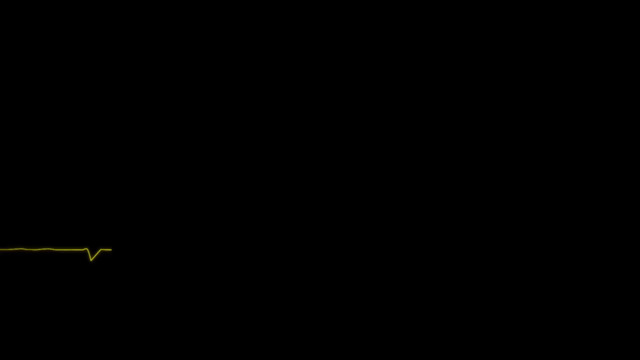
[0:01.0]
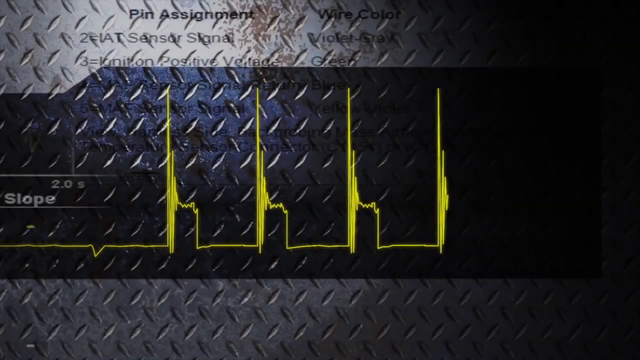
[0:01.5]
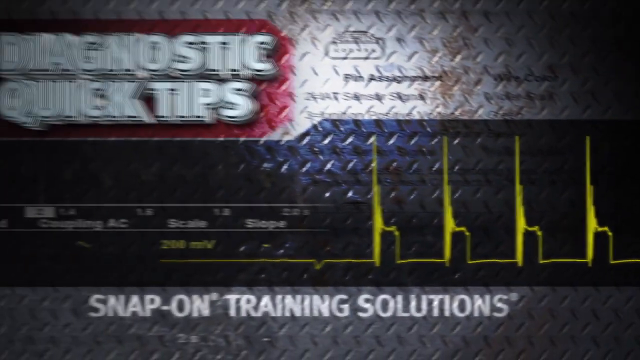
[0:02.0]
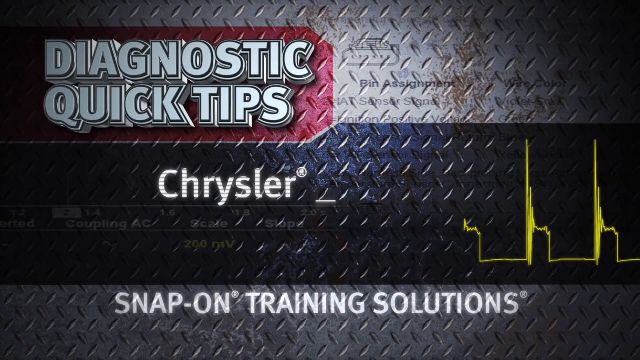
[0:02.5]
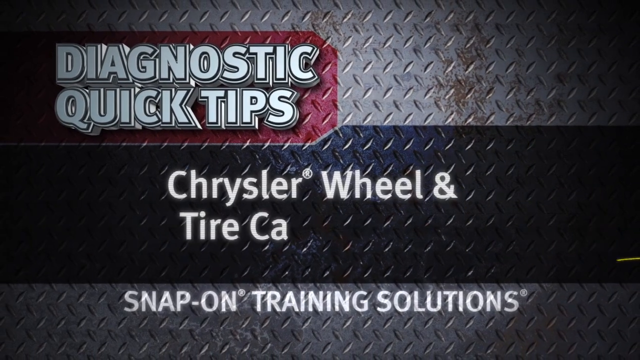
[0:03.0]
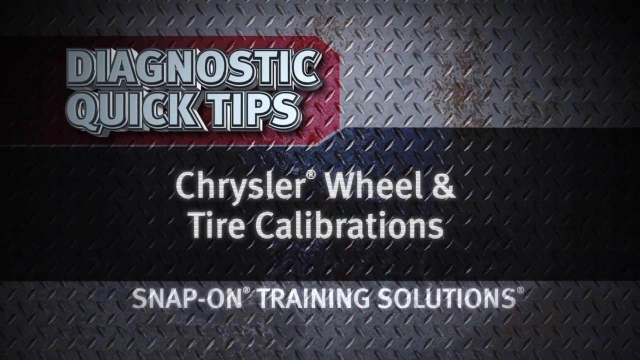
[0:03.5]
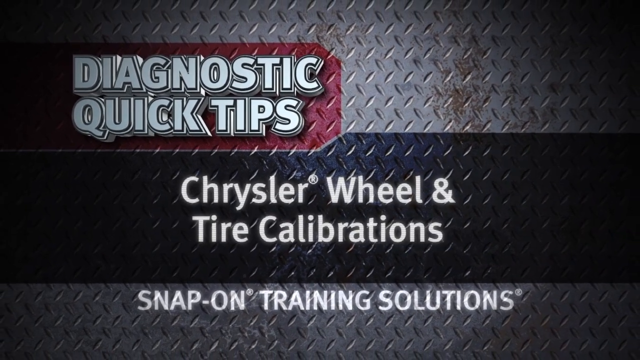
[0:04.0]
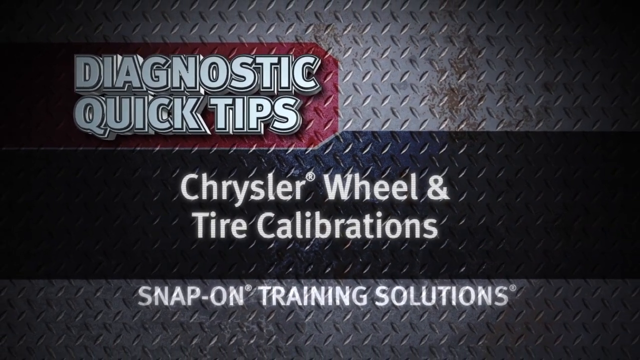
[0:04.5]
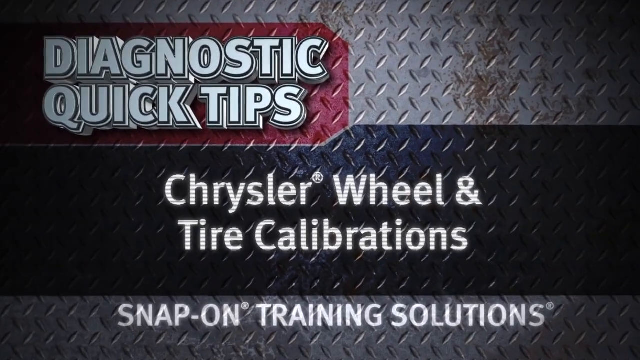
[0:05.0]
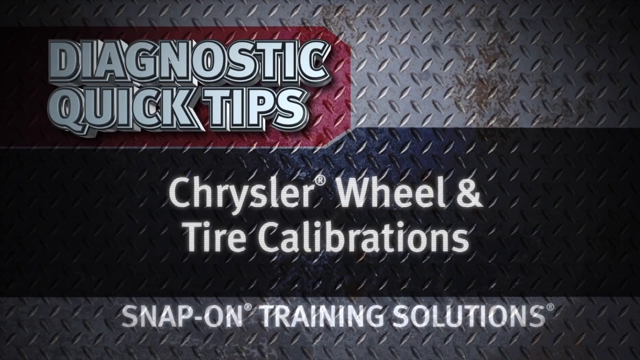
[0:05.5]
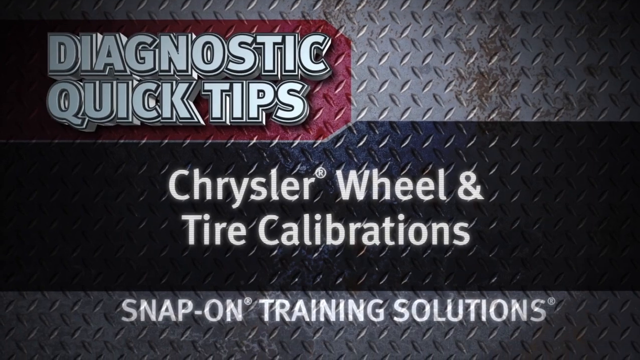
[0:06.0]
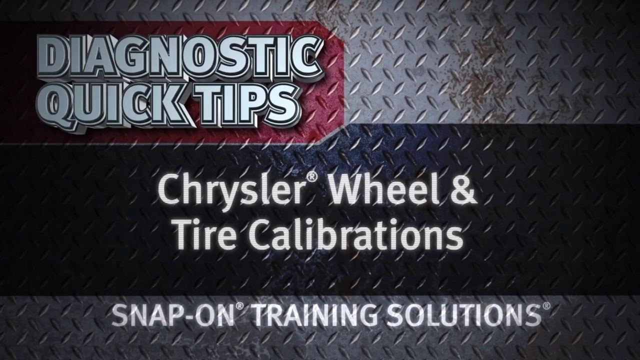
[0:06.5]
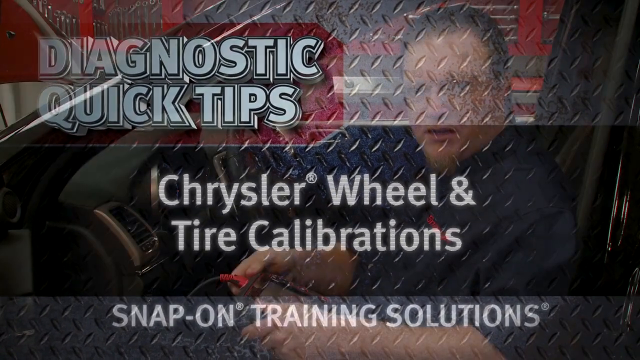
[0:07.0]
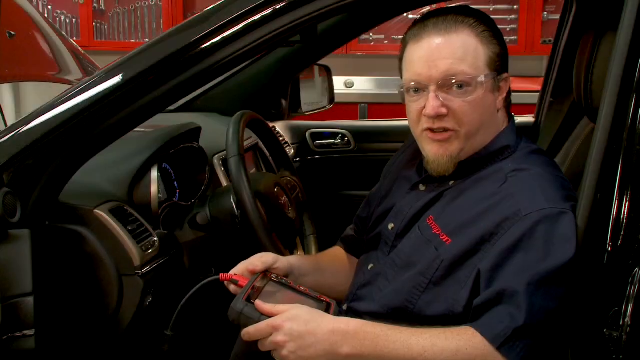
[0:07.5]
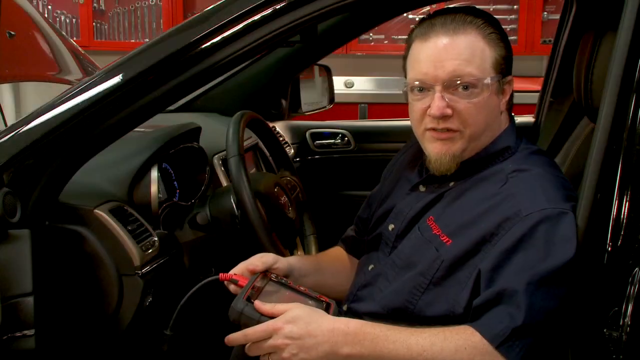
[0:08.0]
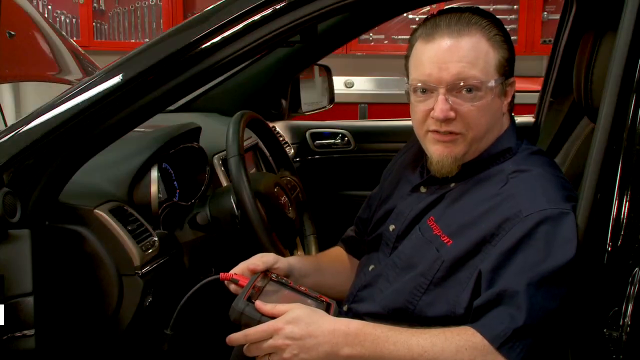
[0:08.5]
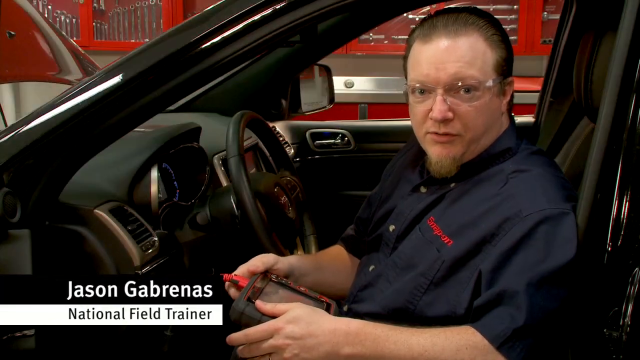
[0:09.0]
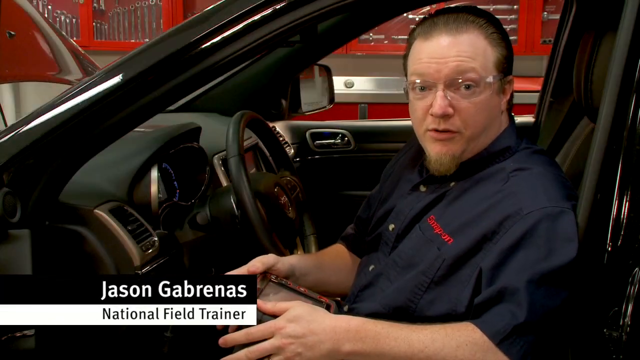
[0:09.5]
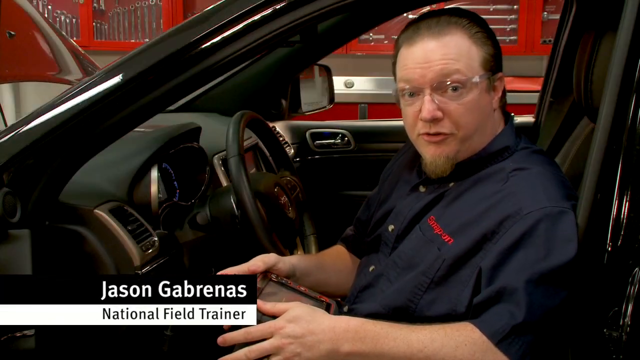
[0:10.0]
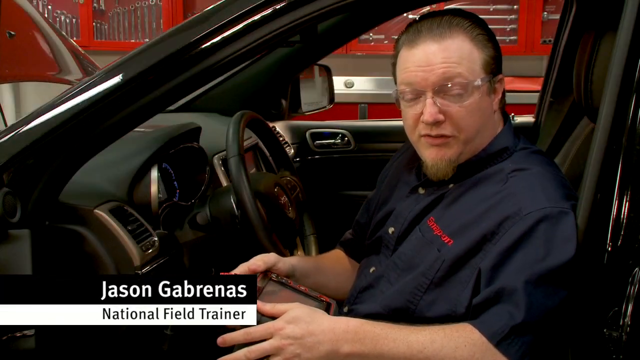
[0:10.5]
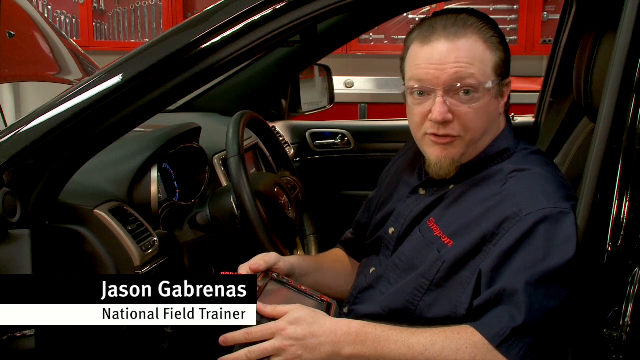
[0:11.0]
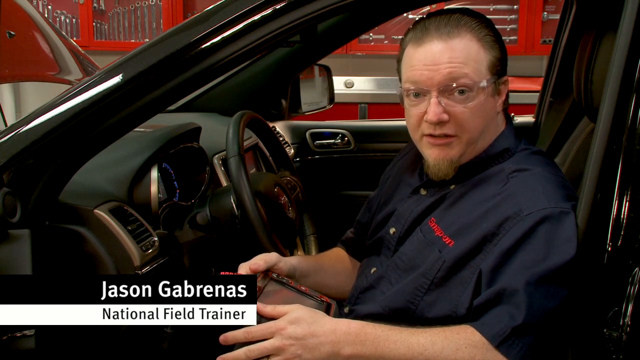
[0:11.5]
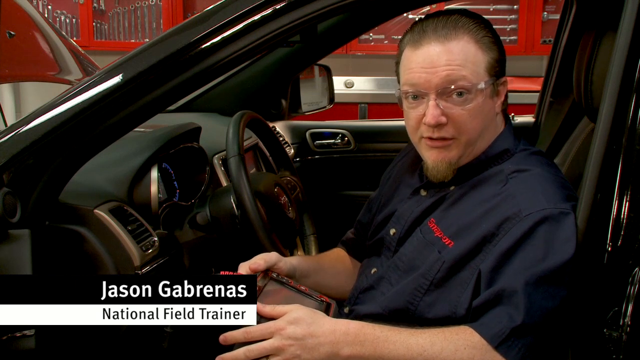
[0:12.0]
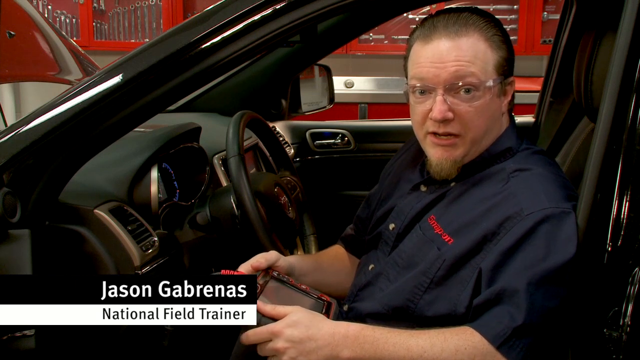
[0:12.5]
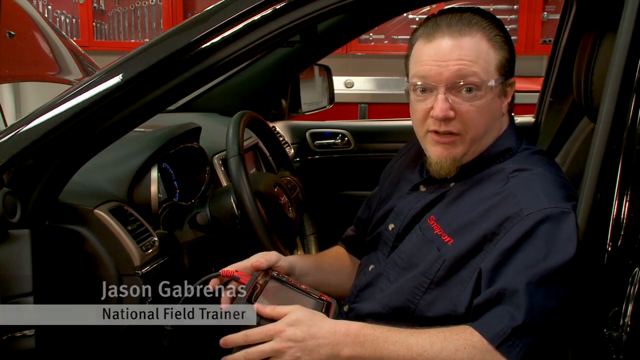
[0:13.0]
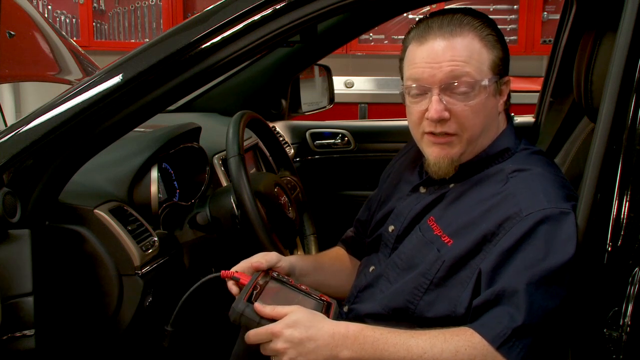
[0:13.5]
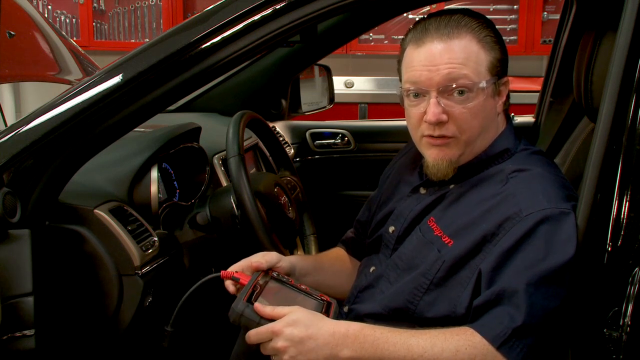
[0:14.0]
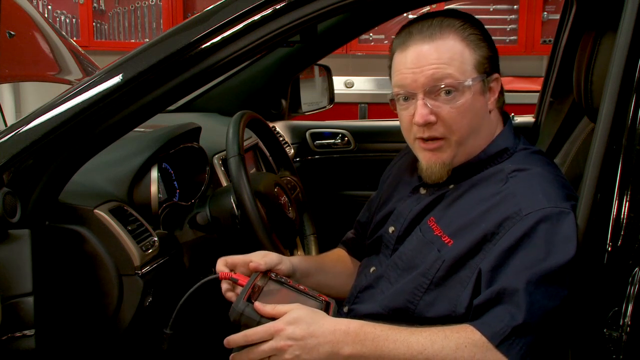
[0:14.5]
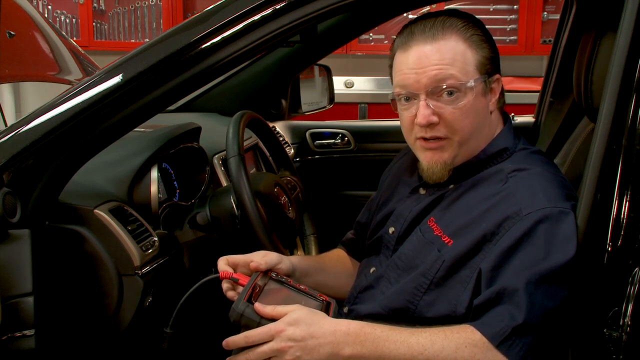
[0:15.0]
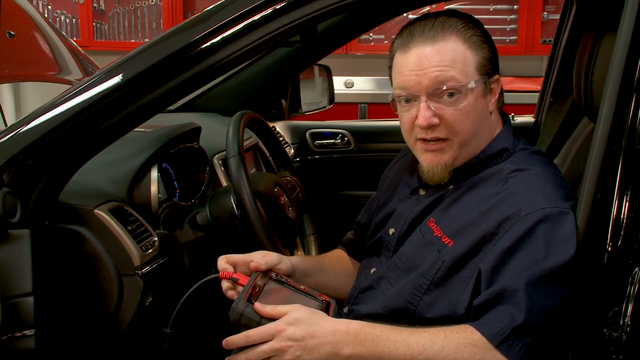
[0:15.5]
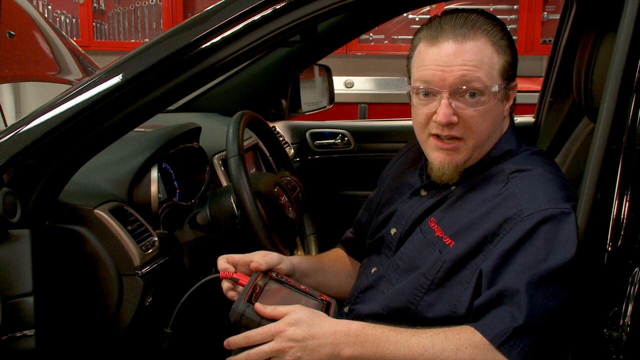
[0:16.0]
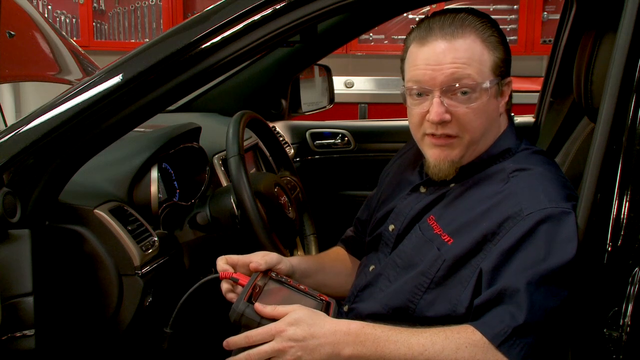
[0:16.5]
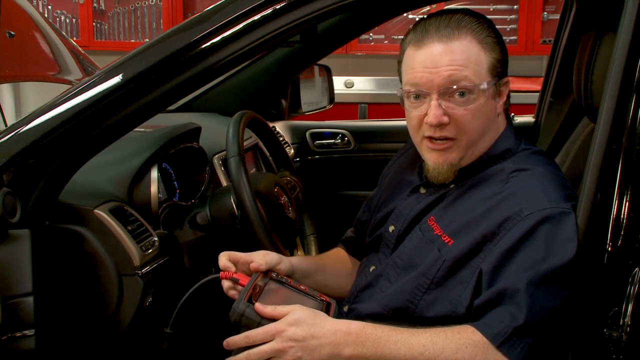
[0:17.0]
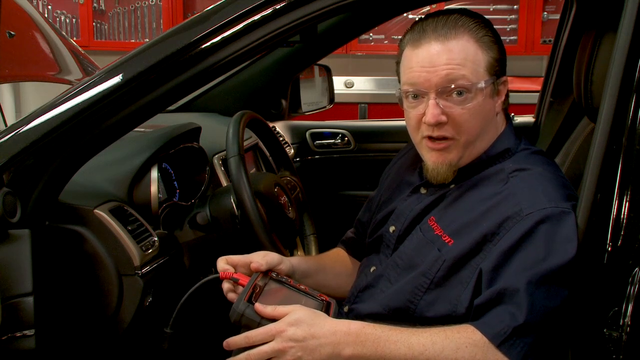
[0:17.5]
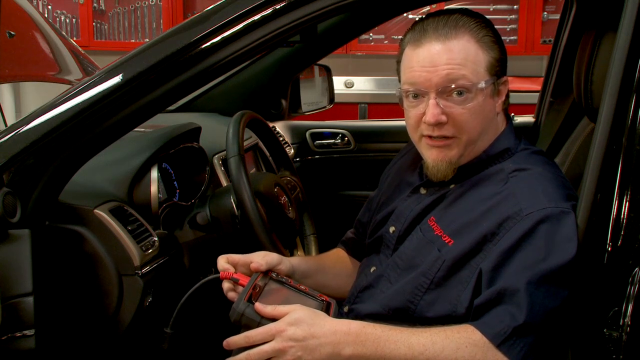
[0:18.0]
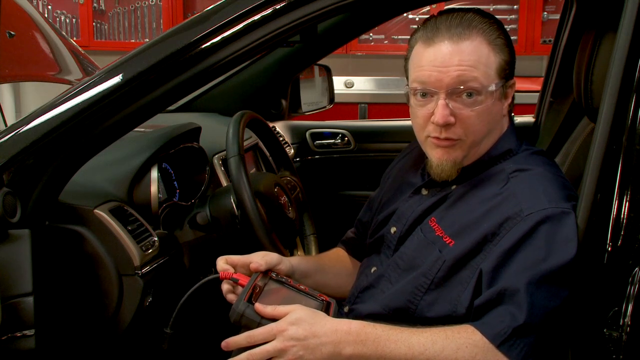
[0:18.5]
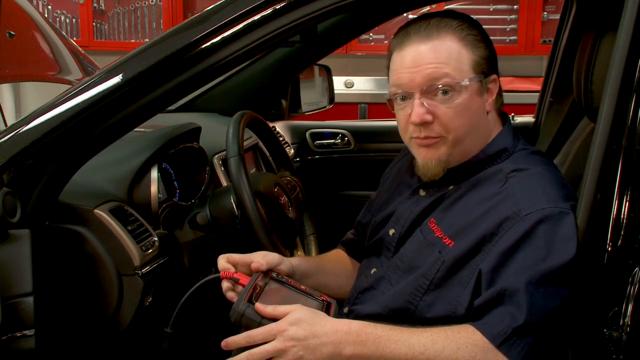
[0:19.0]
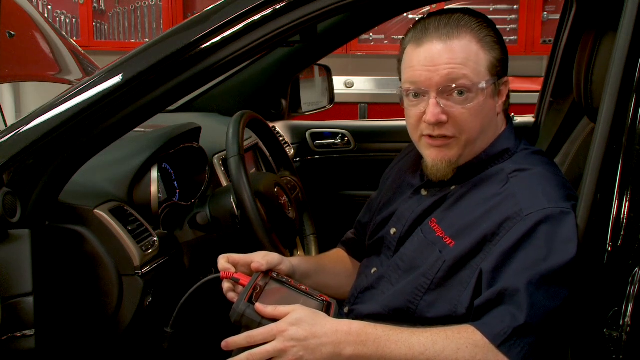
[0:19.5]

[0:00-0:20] The video fades in from black to a graphic with a metallic-looking background. The text reads "diagnostic quick tips, Chrysler wheel and tire calibrations, snap-on training solutions." It then cuts to a man named Jason Gabrinas, a national field trainer, sitting behind the steering wheel of a car with a device in his hands, talking to the camera. He appears to be middle-aged, perhaps in his 40s, with some facial hair and glasses. The car is presumably a Chrysler, since the title screen mentions Chryslers. The setting seems to be a garage: screwdrivers and other tools possibly used for fixing cars are on the walls behind him.